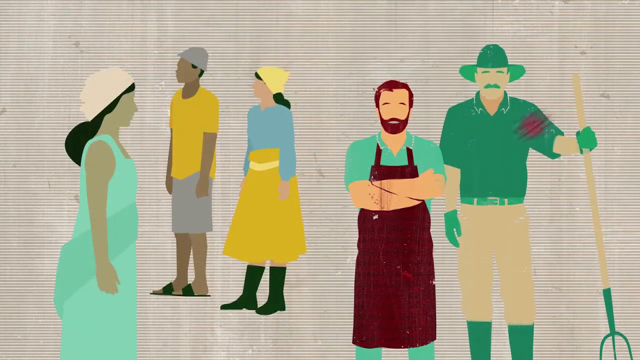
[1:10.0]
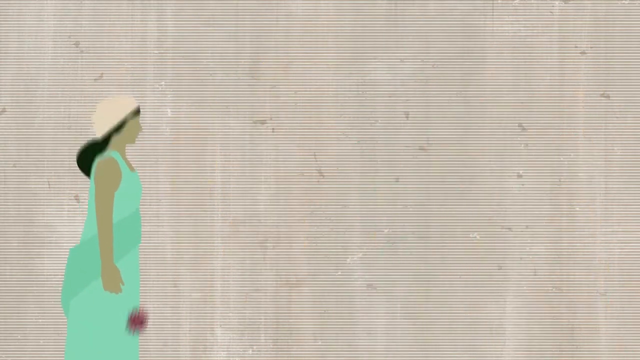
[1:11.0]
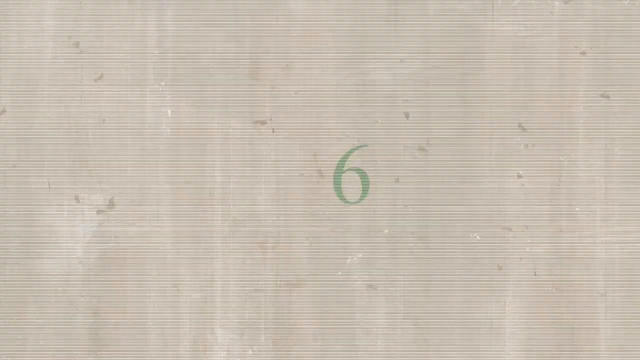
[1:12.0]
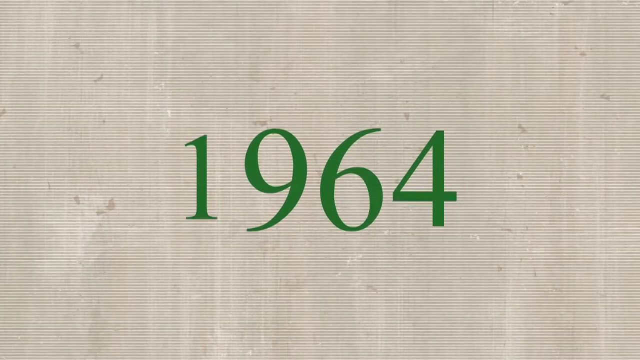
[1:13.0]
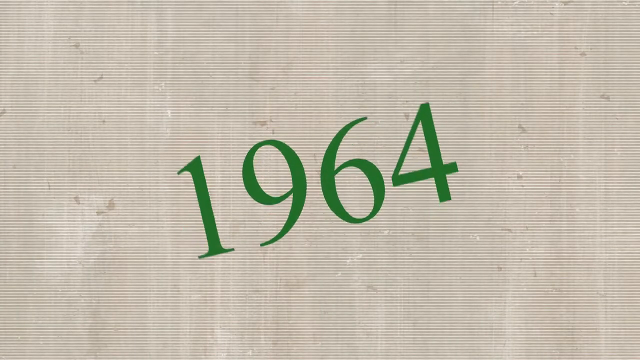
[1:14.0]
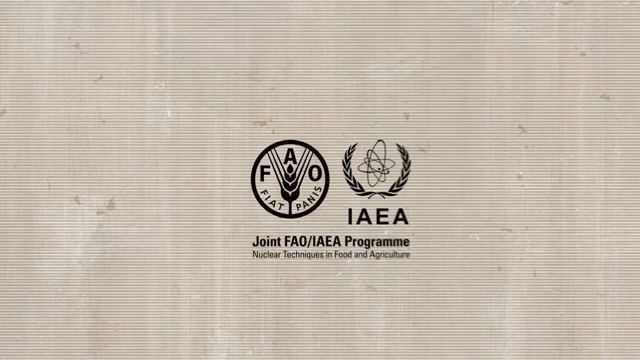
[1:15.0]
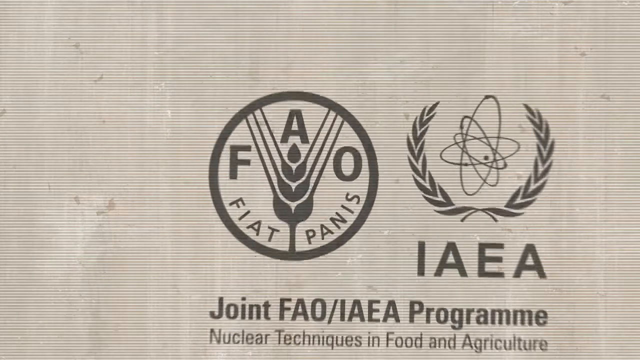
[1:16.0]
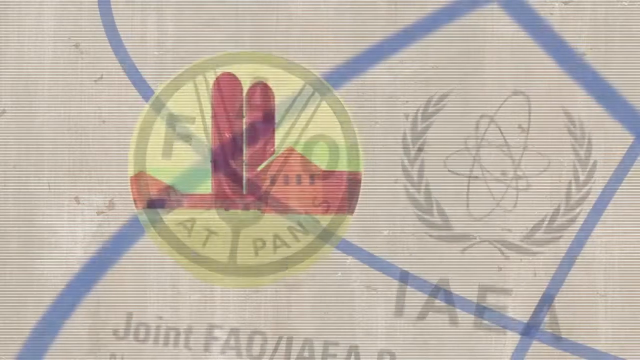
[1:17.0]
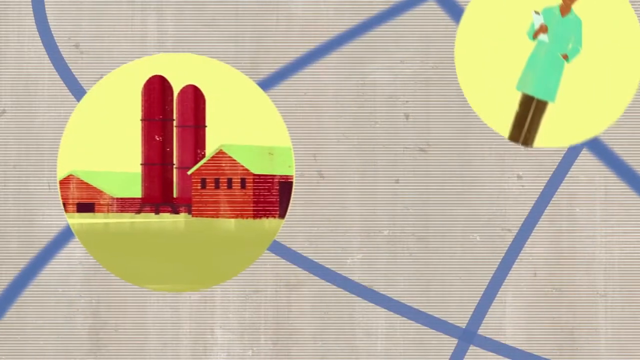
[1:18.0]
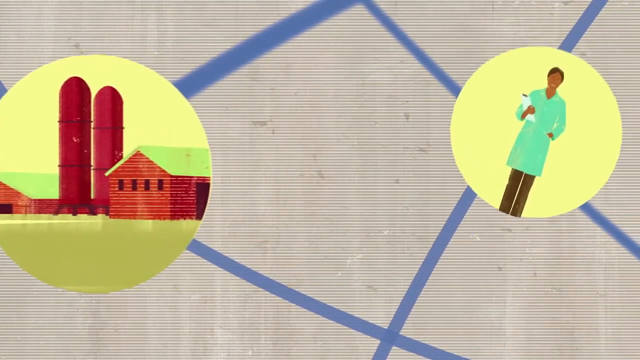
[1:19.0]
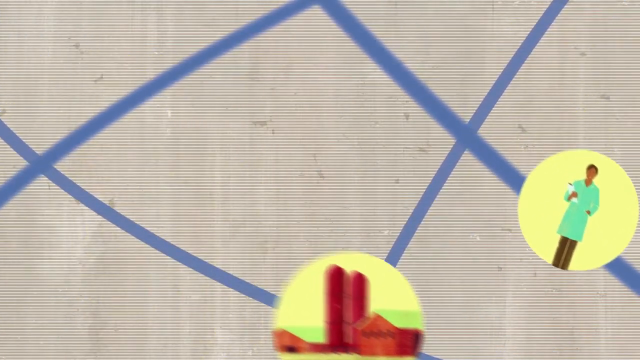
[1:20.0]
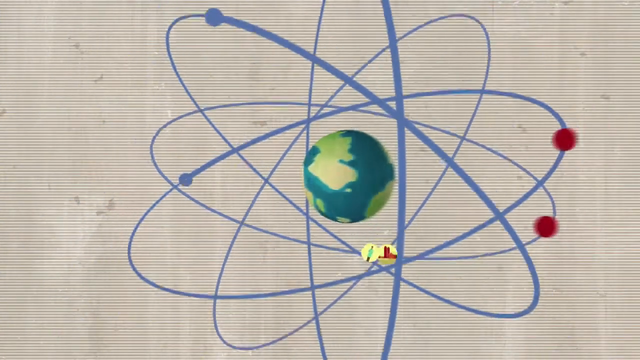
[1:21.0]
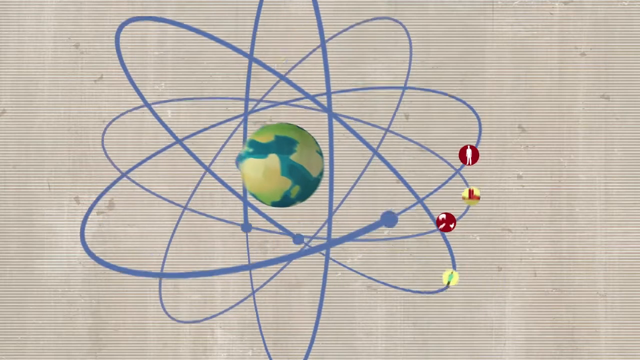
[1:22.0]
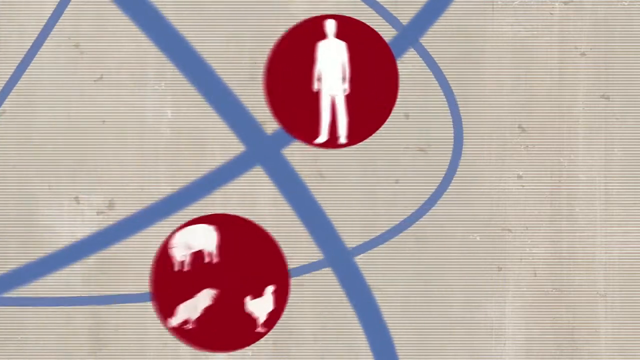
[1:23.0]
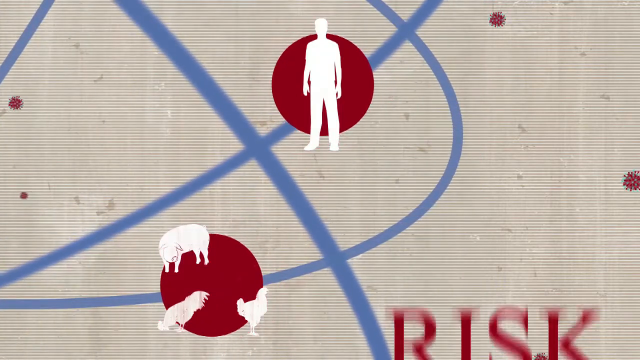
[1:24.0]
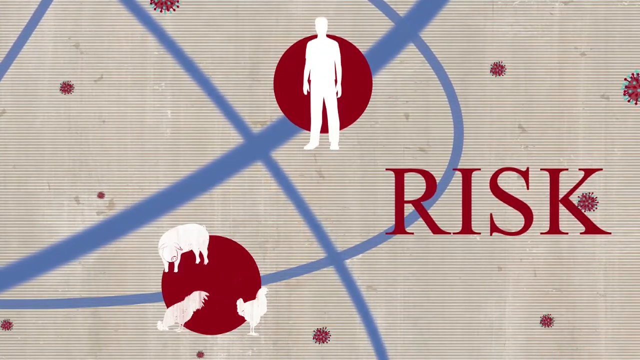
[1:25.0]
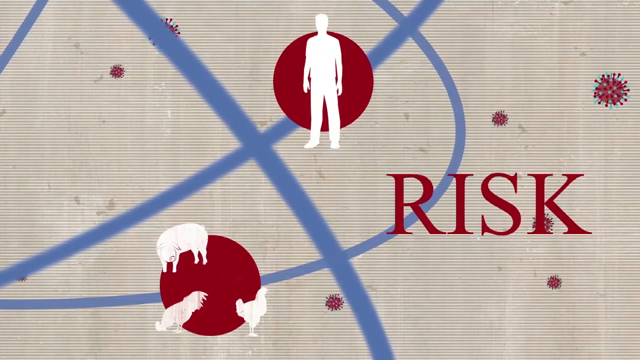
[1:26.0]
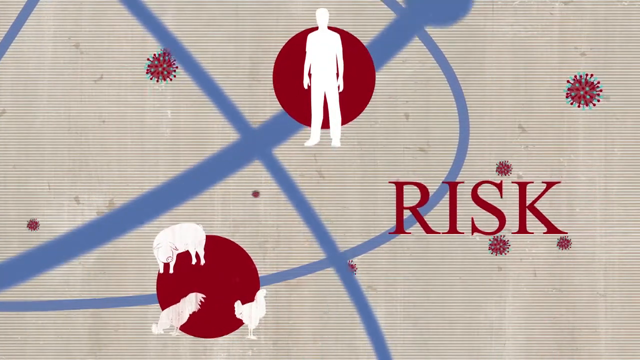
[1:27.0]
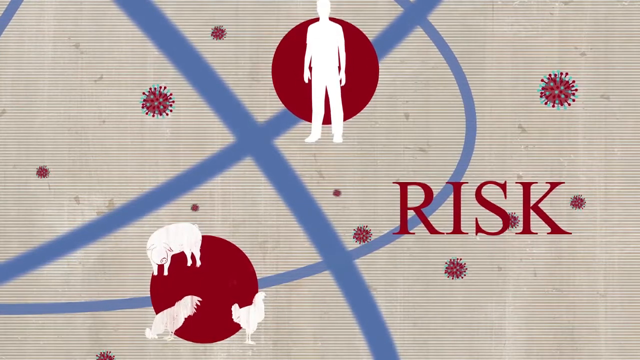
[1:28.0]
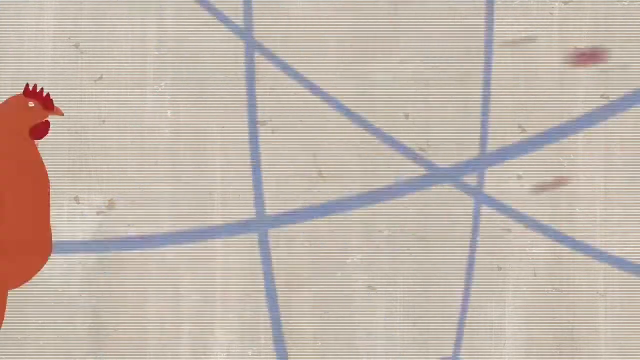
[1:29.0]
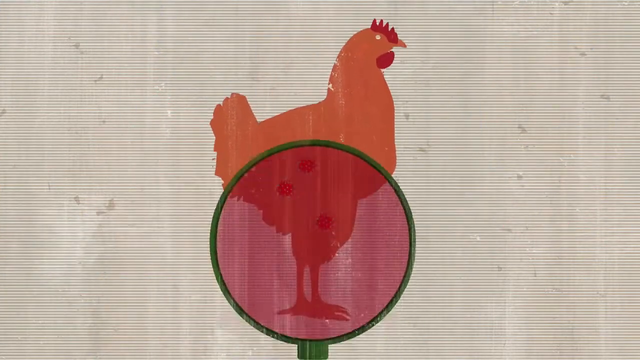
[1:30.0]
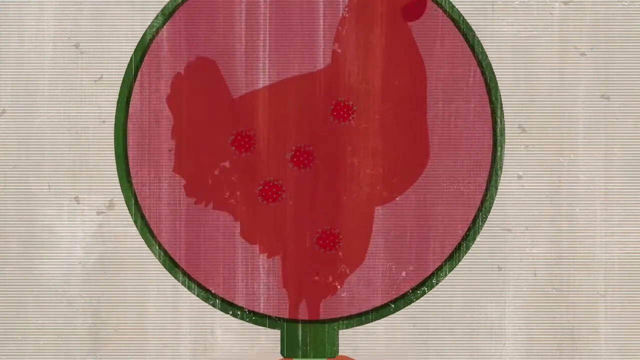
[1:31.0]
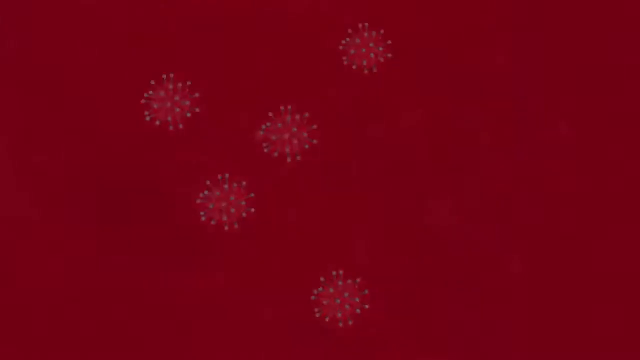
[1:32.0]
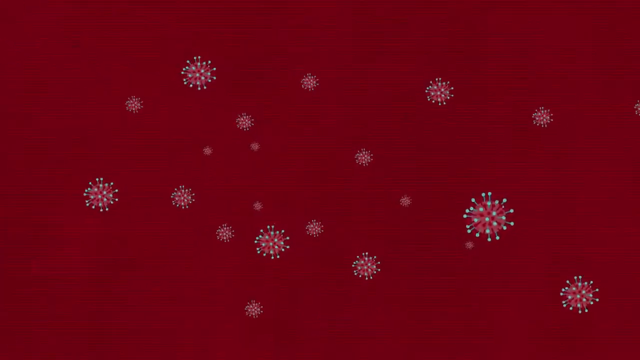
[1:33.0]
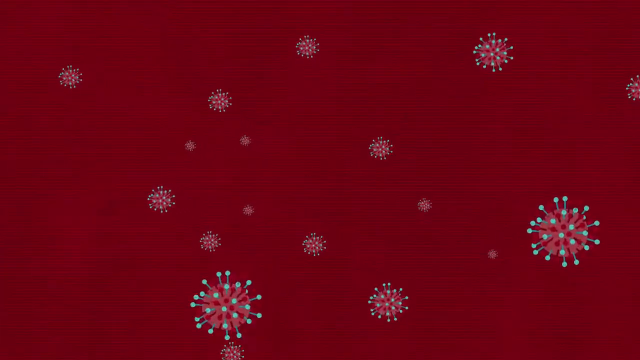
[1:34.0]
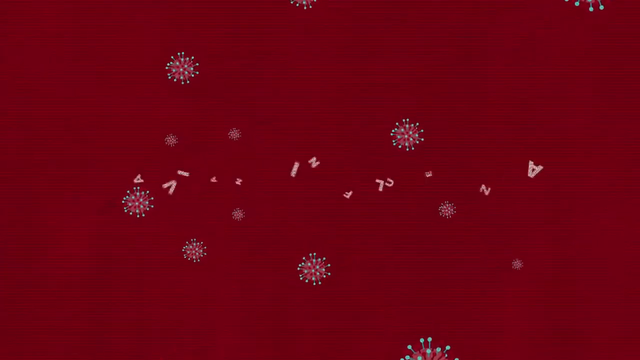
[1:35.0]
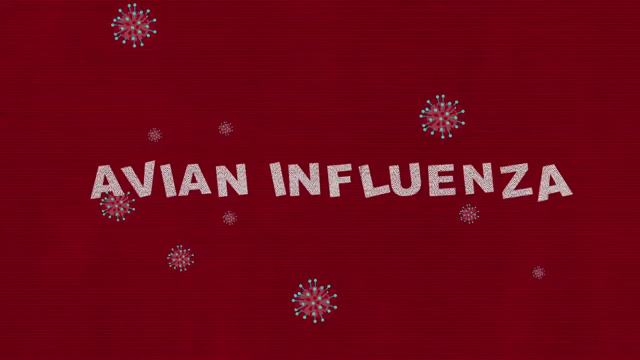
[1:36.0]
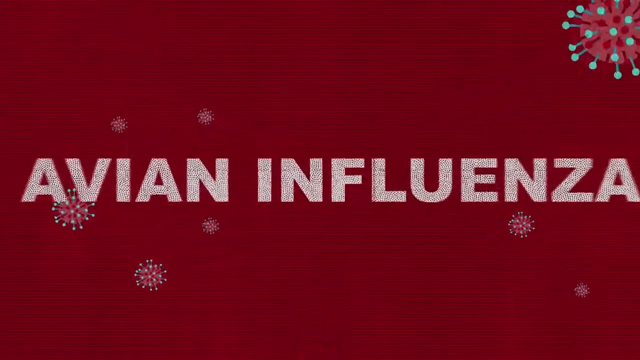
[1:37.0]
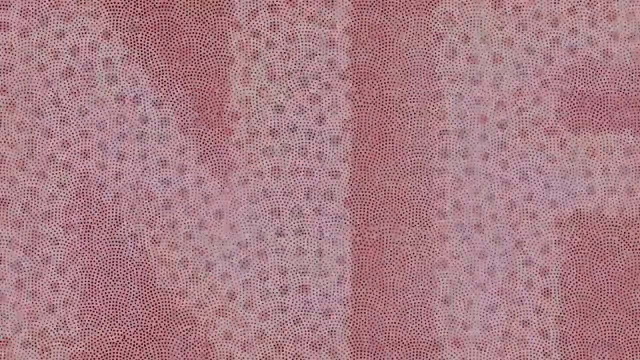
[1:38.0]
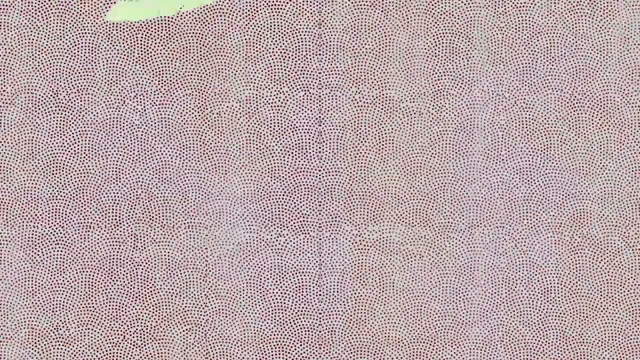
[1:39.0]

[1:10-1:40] The two men are on the right side of the screen and three women are on the left. One woman wears a yellow apron, a blue shirt and a yellow-looking bandana on her head. Next to her is apparently a woman in a yellow shirt, gray shorts, a gray cap almost like a snow cap, and black slides. On the left is a woman in a teal dress with a beige hat and longer black hair. Little red balls appear to be launched from the screen toward the viewer's side, knocking over each of the people. The number "1964" comes up in green. The view then zooms in on the logos "FAO" and "IAEA", which appear large on the screen and then fade into several circles: a yellow circle showing a red farmhouse or barn, and another showing a doctor in a blue lab coat with a white clipboard, apparently a Black female doctor wearing brown pants. The view zooms out to show the circles moving about what appears to be an atom with blue rings in various directions, with a spinning Earth in greenish hues at the center. Other red circles appear, one with the white silhouette of a man and another with a pig and two roosters in white. The word "RISK" comes up in red. What appears to be an inside view zooms in on the inside of a rooster, where red viruses appear to be floating by. Then the text "avian influenza" appears, and the view zooms in on the words, which appear to be made up of little red dots.